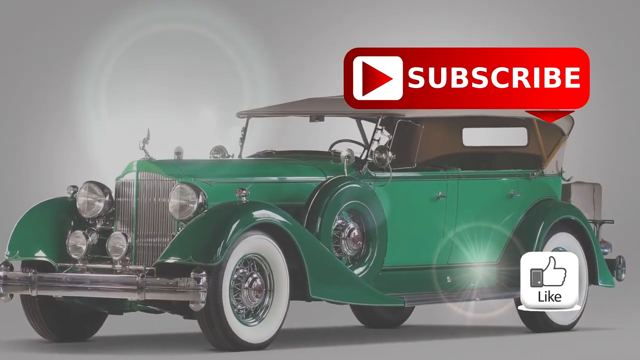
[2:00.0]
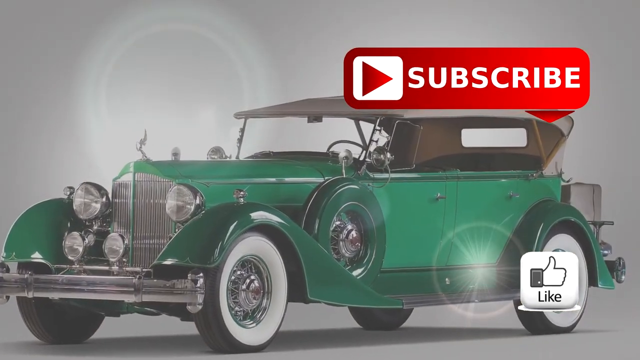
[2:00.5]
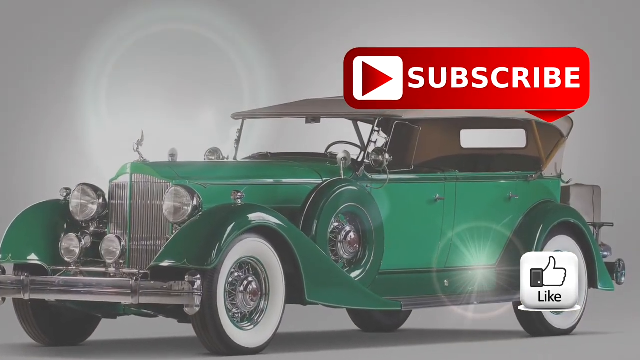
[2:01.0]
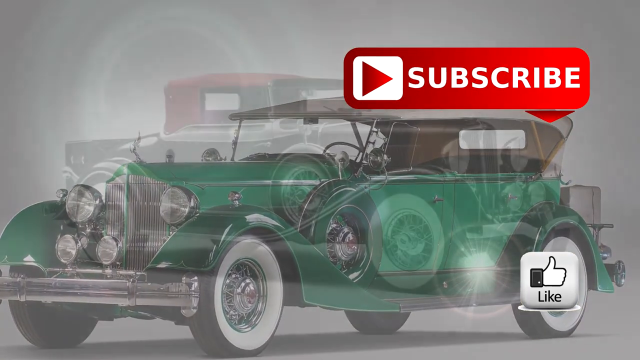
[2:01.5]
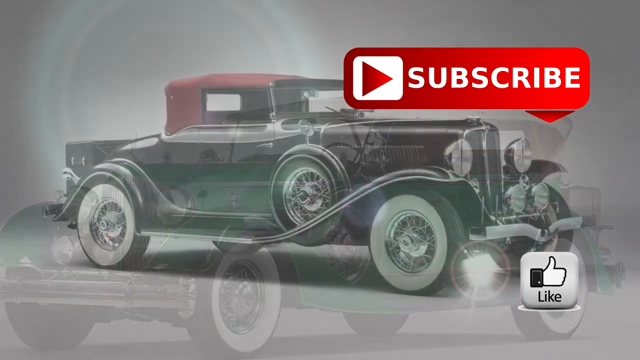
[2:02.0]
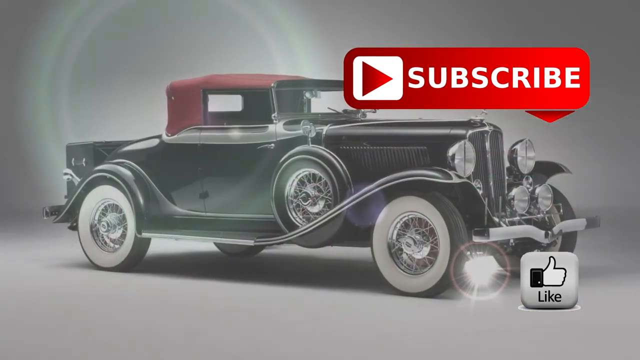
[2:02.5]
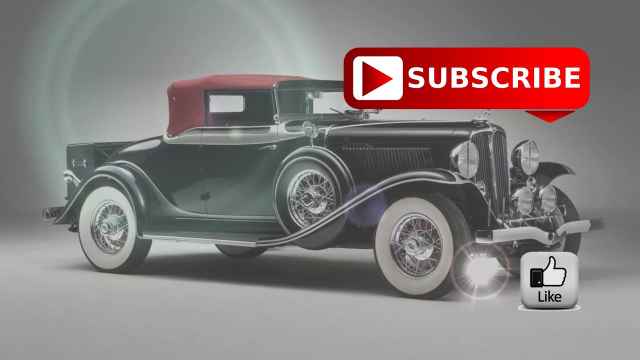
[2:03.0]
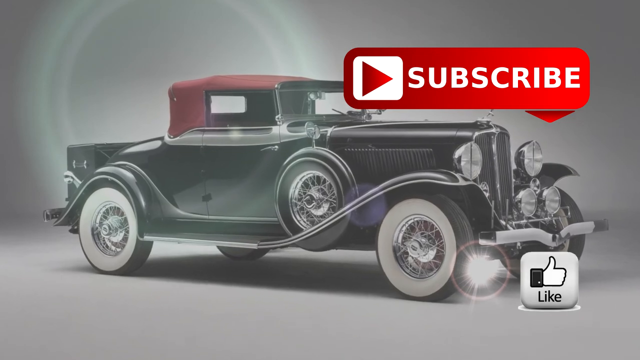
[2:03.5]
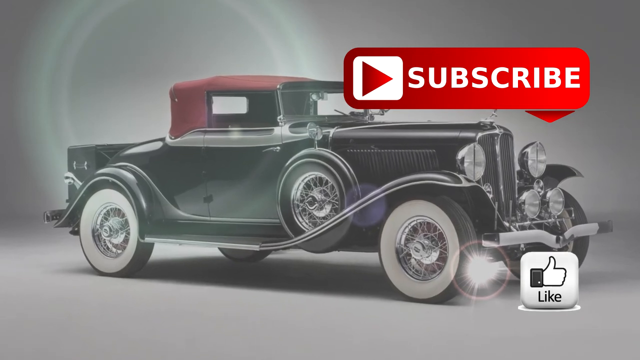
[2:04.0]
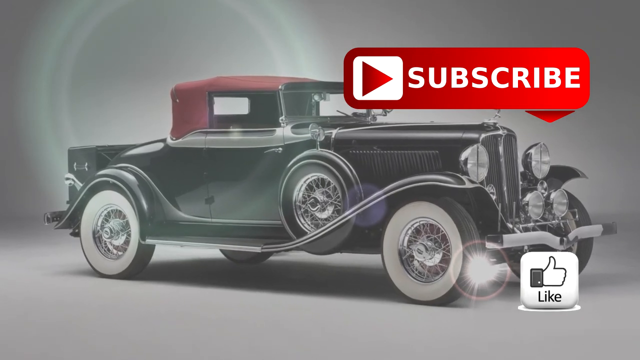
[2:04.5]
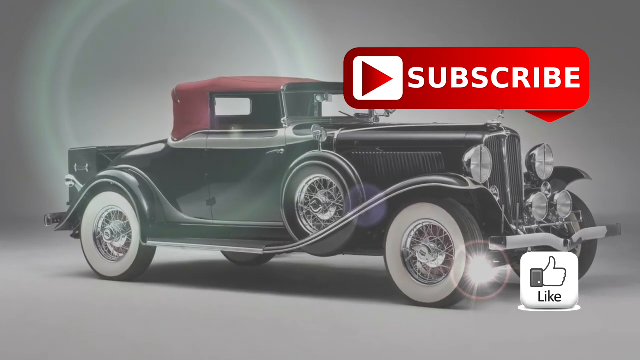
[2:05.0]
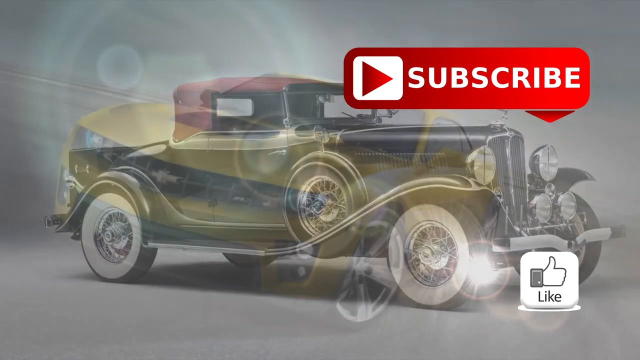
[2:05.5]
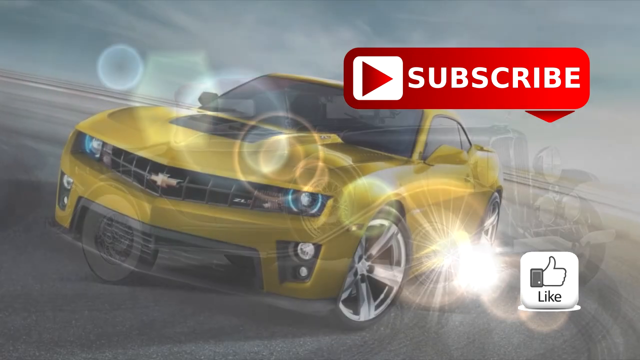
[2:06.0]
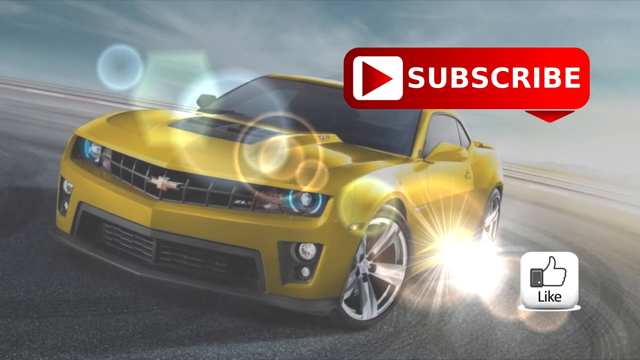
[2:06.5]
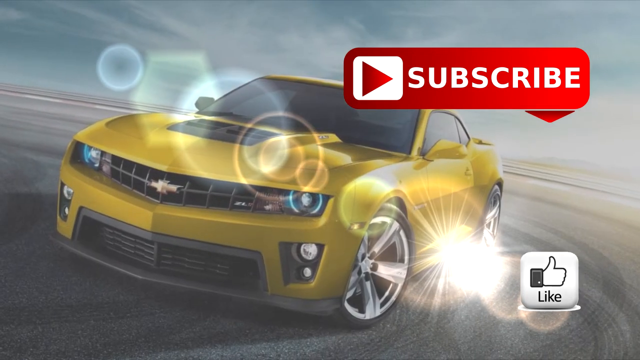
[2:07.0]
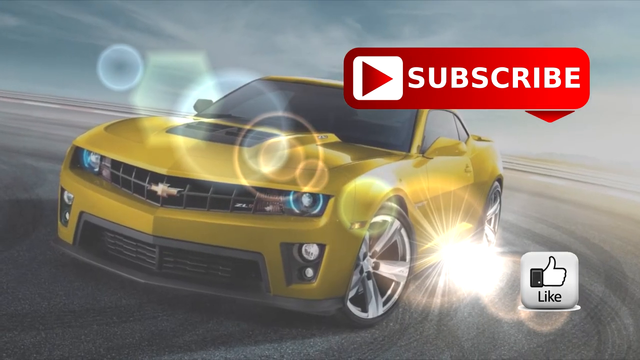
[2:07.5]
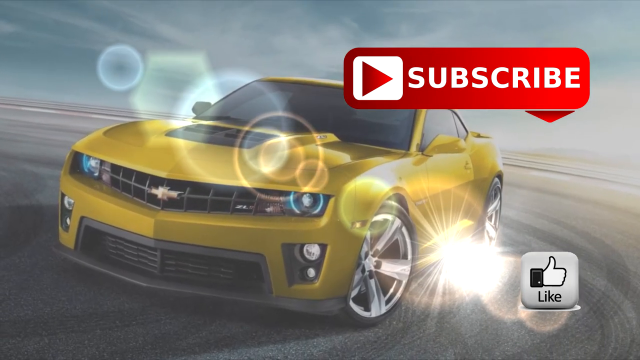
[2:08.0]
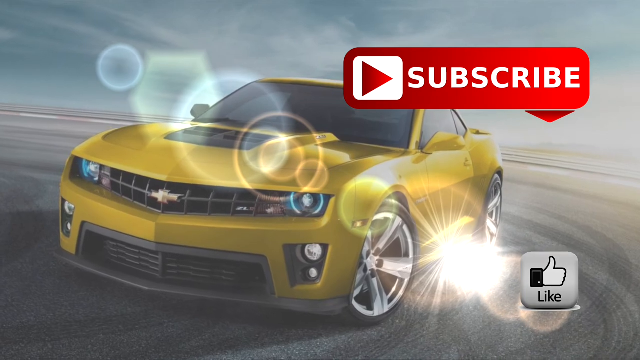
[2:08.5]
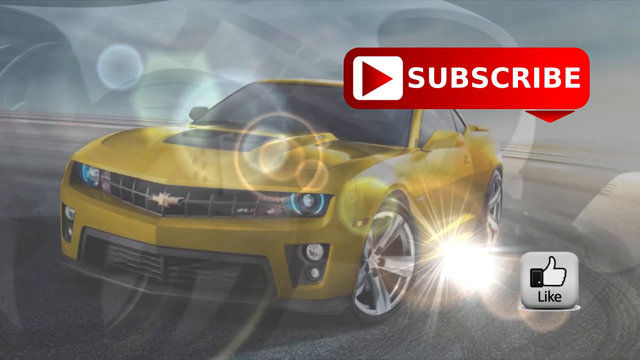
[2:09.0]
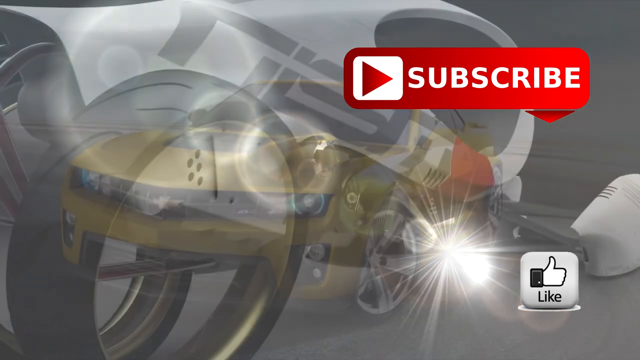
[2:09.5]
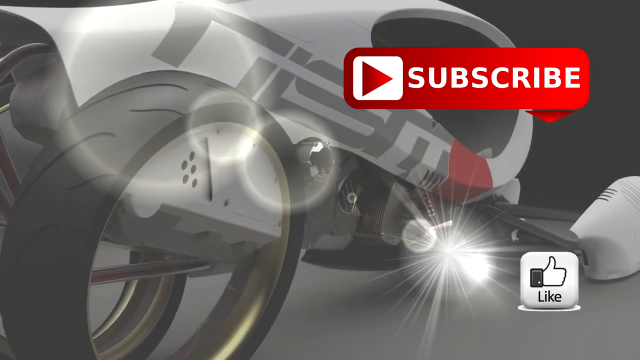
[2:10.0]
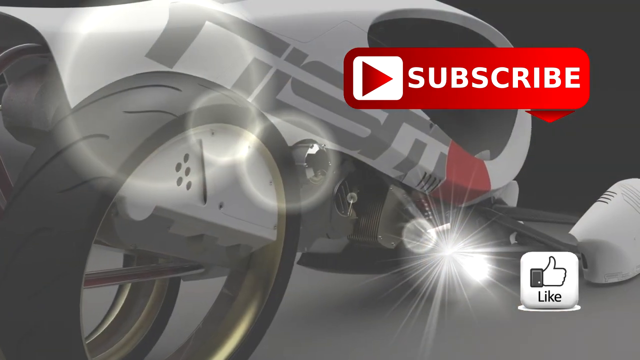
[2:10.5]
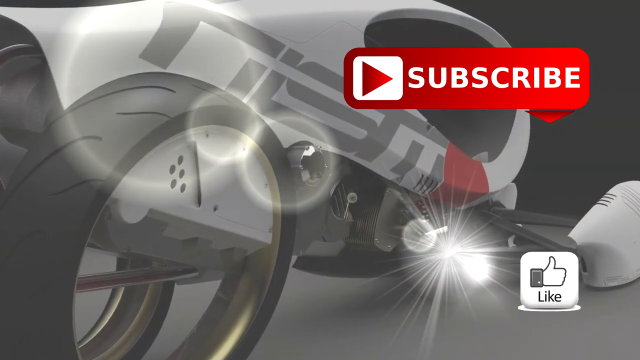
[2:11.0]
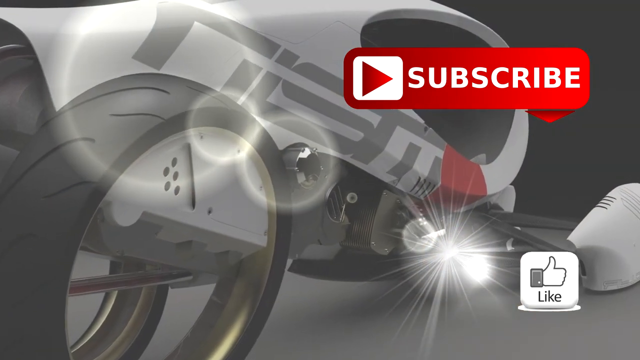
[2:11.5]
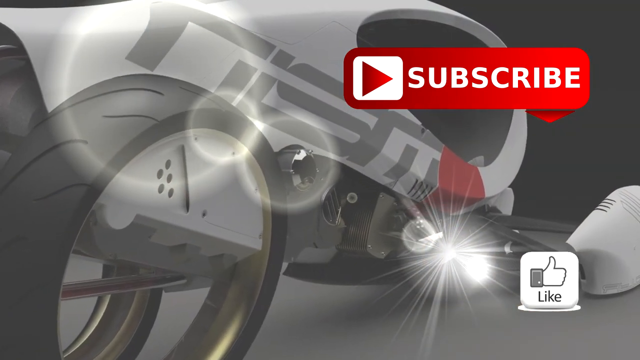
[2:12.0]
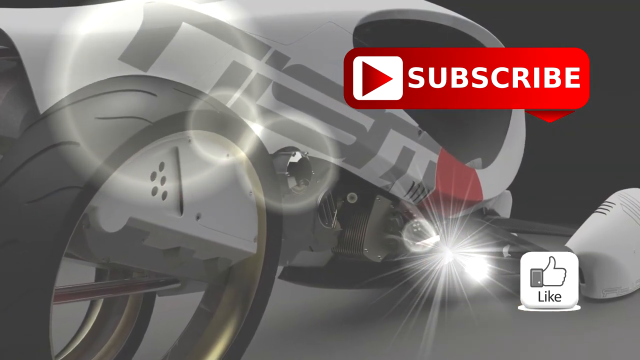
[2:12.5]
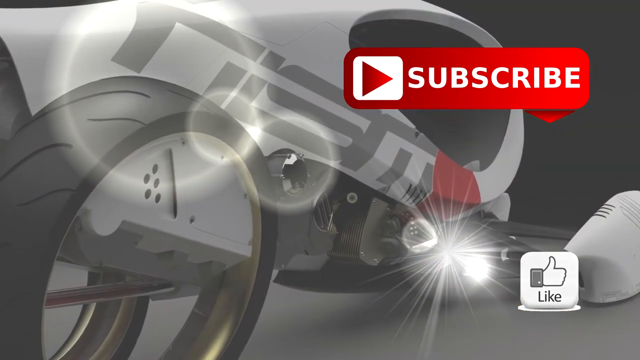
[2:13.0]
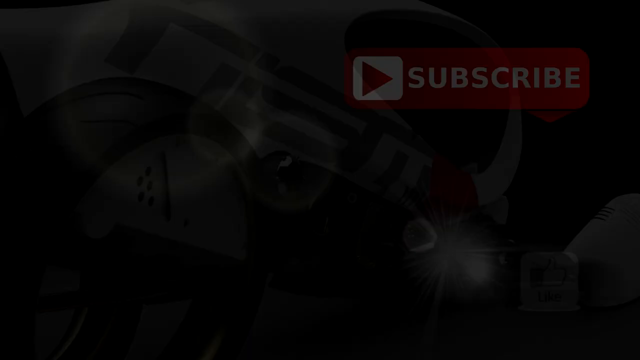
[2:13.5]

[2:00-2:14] The green car has two headlights up above the fenders and two more coming off the grill. It is a four-door and has a tire on the side of the car just in front of the driver's side door, with a gold or green holder around it. The camera pans to another car like it, except black with a red top, its front pointing toward the right and back to the left; this one is only a two-door. It then cuts to a yellow Corvette with the front facing the camera and slightly to the left and the wheels turned to the left, under a blue sky, apparently sitting on sand, as it rotates a little. Then the view is inside of a car.